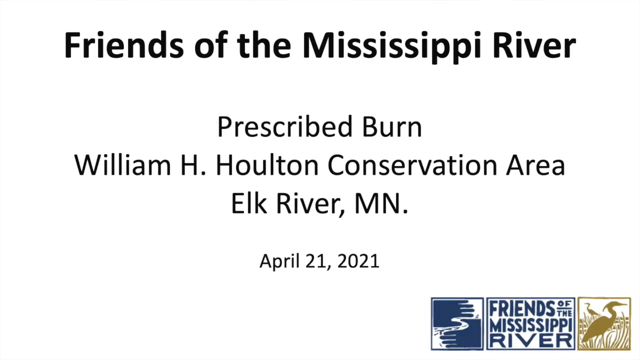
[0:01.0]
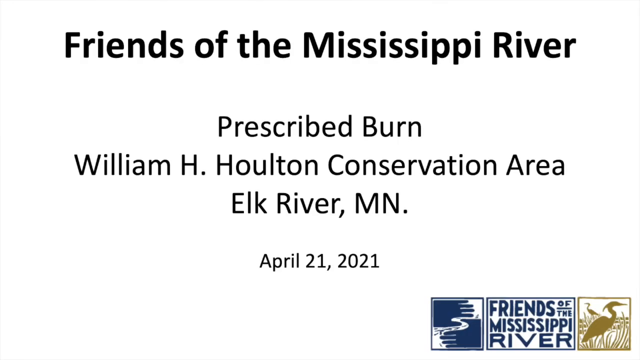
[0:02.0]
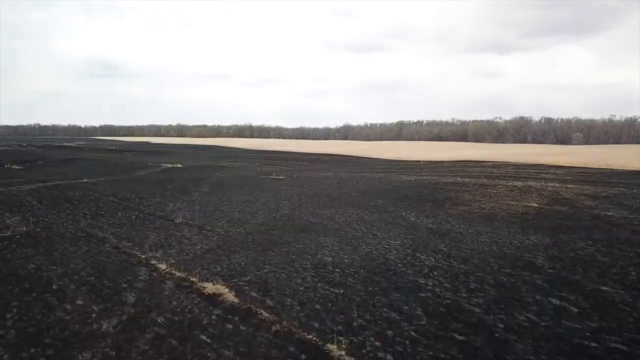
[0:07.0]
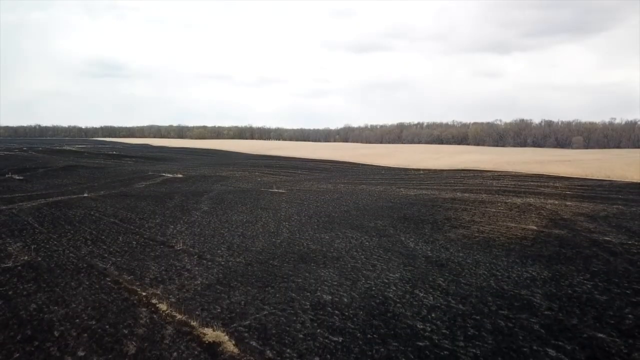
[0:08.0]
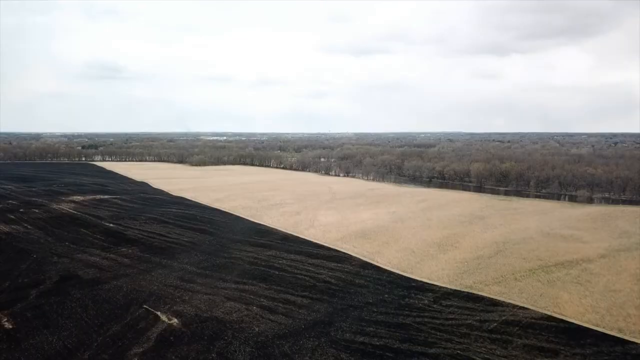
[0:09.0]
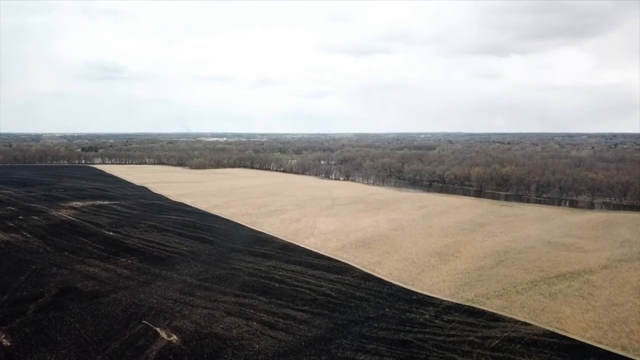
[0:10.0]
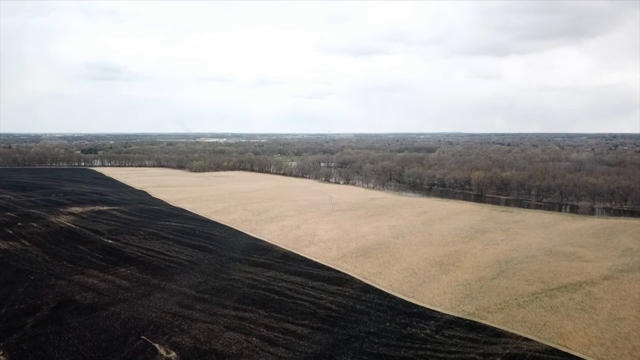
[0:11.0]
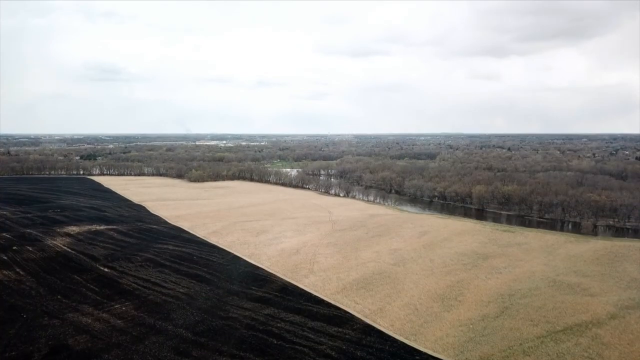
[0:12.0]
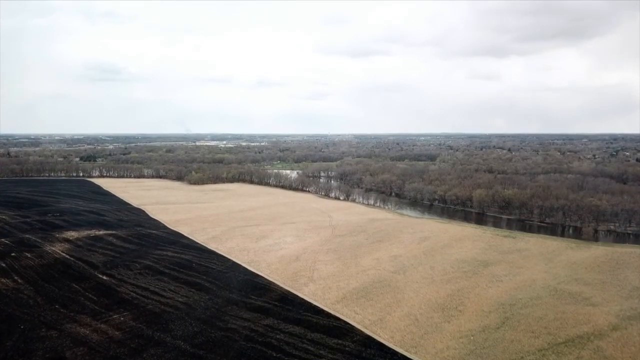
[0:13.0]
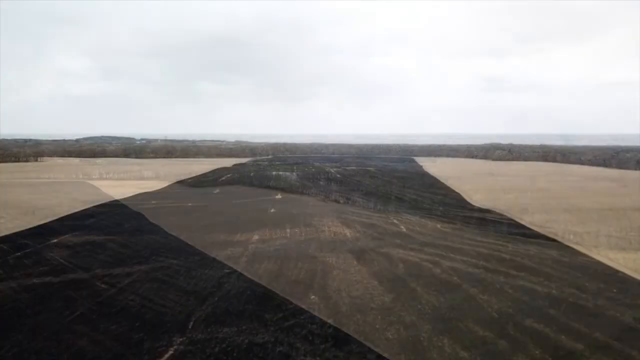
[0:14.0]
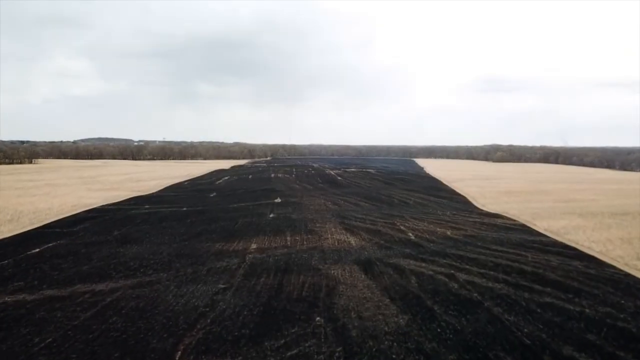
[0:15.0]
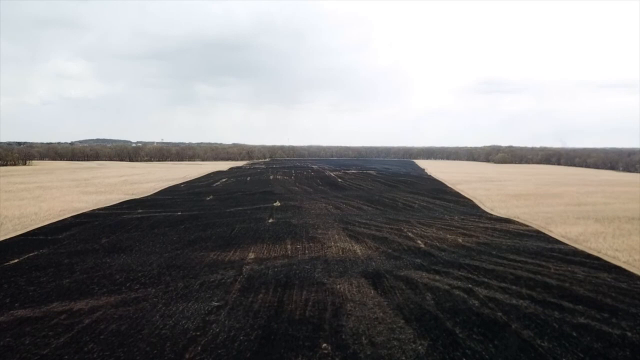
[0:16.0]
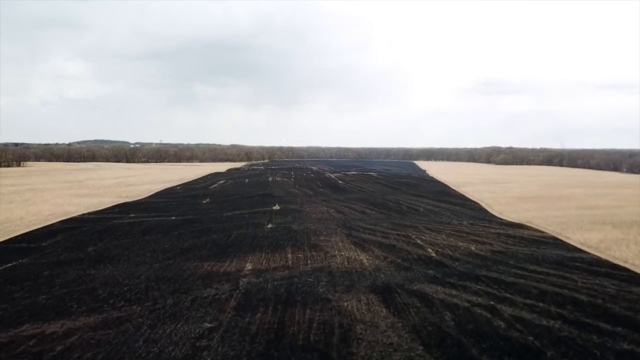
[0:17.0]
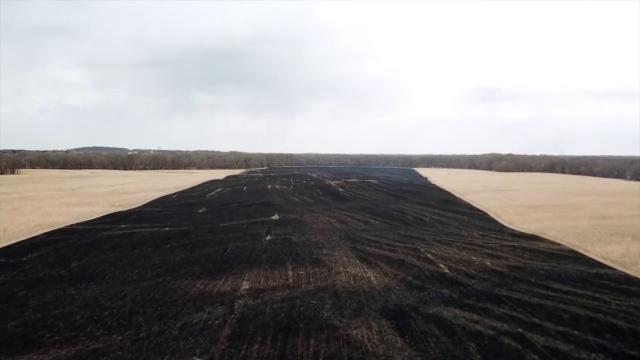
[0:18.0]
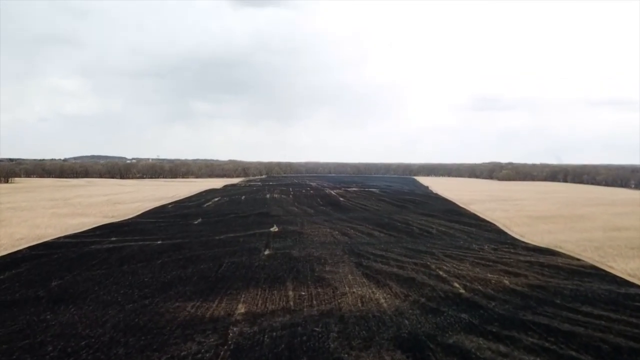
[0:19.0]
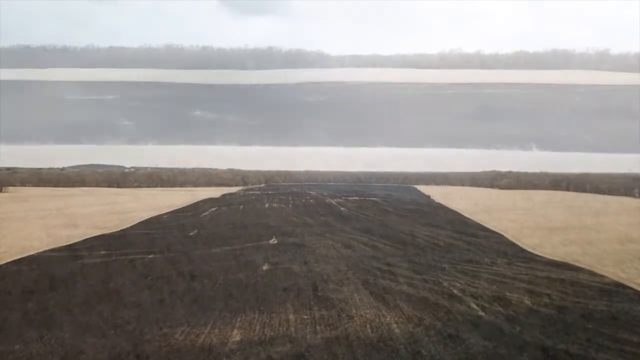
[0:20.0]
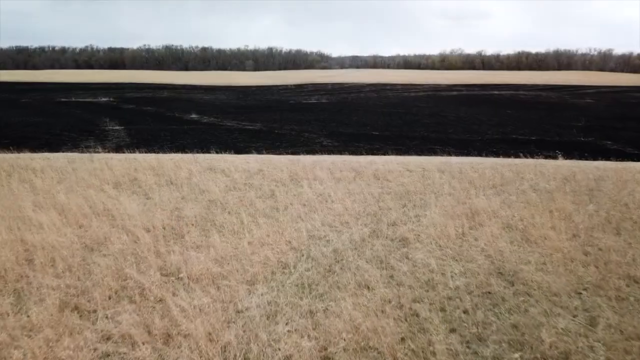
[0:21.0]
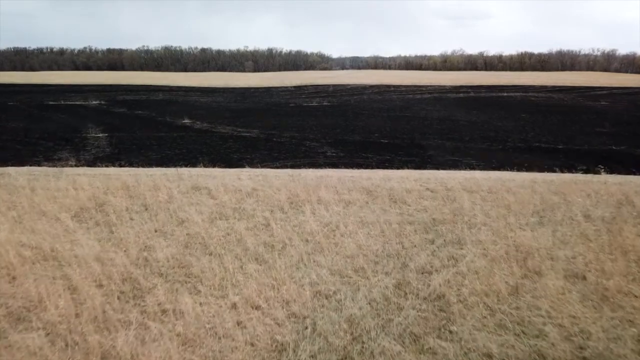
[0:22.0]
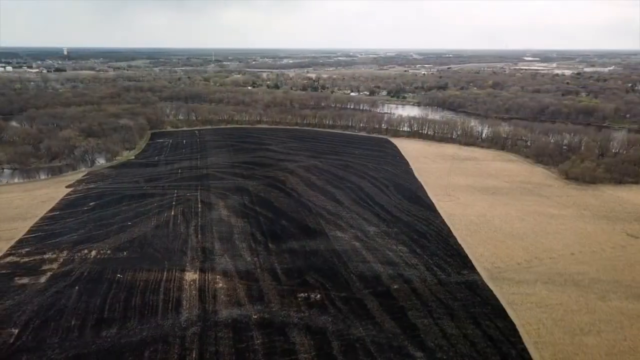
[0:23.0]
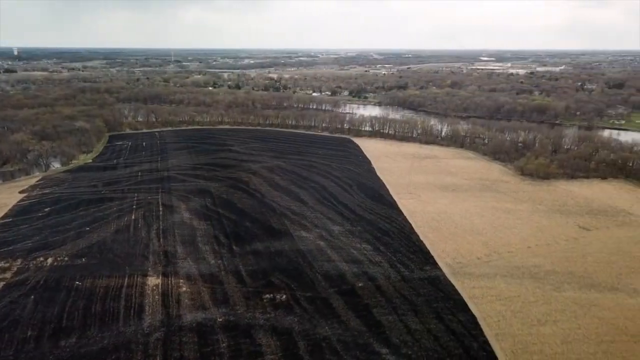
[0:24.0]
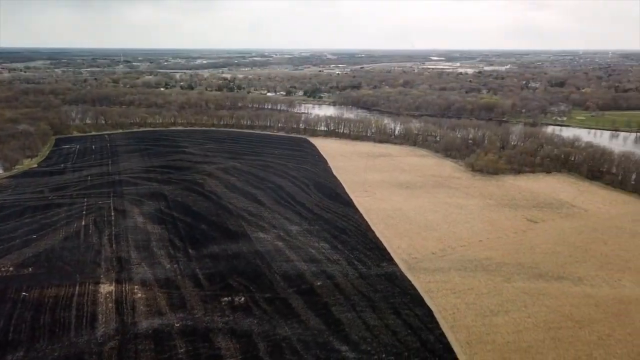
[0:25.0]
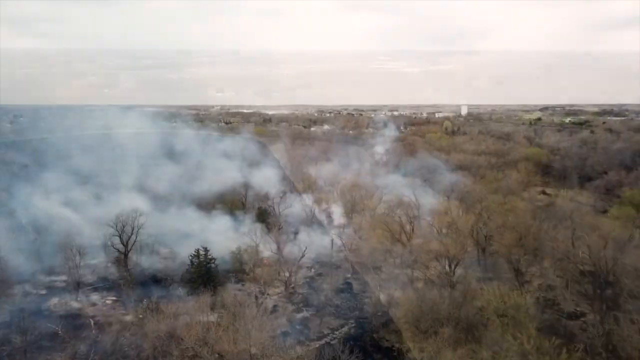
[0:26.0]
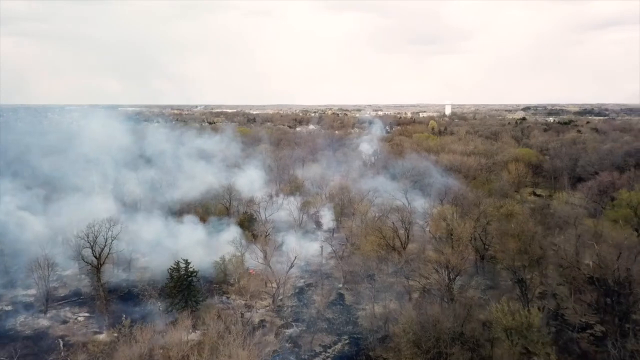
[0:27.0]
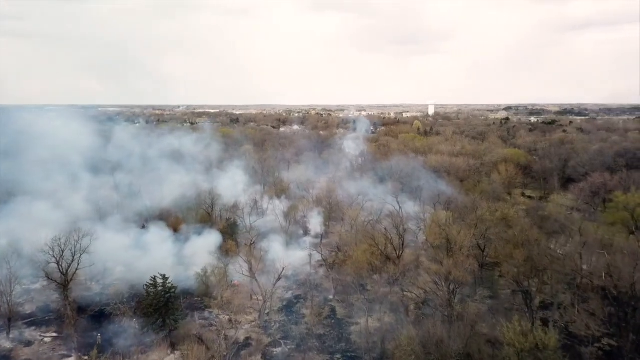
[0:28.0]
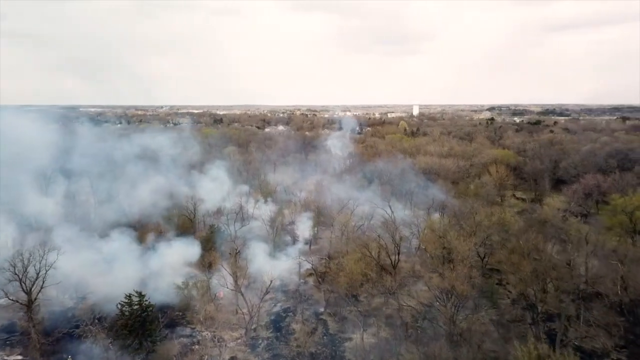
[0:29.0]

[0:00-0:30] The video concerns the Friends of the Mississippi River. On-screen text identifies a prescribed burn at the William H. Houlton Conservation Area, Elk River, Minnesota, with the date April 21st, 2021. The video then shows the Minnesota River from high above in an aerial shot, flying over it and showing different aspects of the controlled burn. A lot of smoke, and something like steam, rises from the area. The river has a brownish appearance, something like a beige-ish brown color.